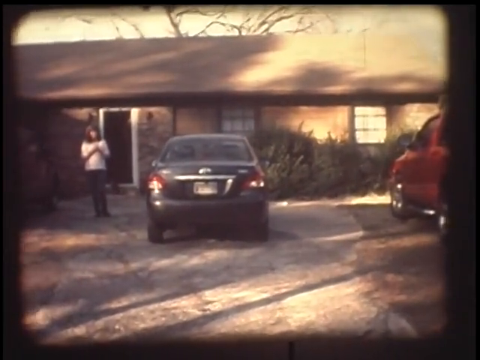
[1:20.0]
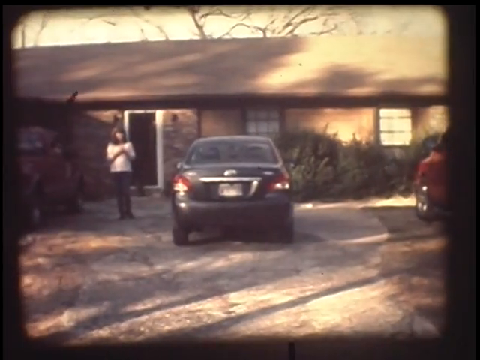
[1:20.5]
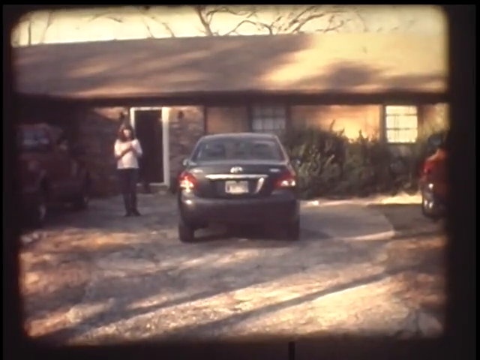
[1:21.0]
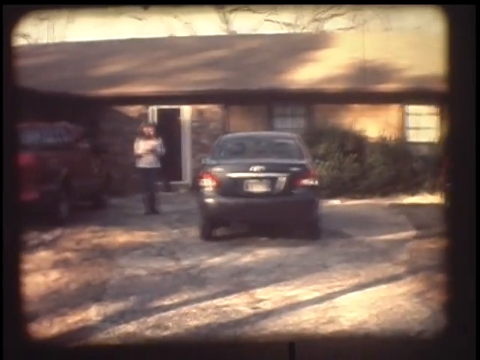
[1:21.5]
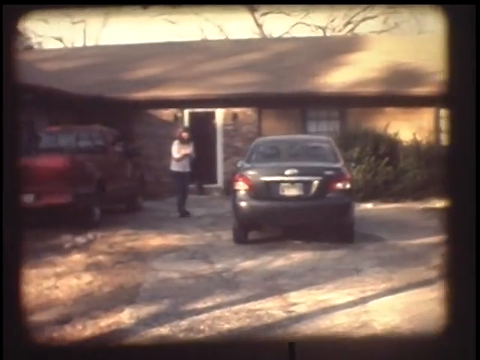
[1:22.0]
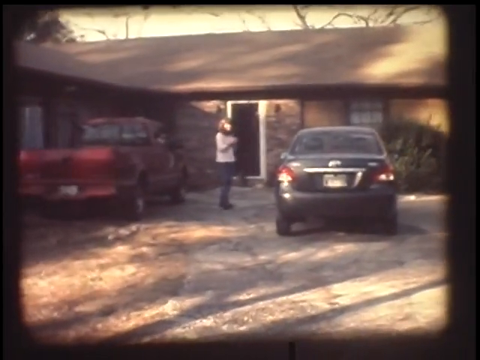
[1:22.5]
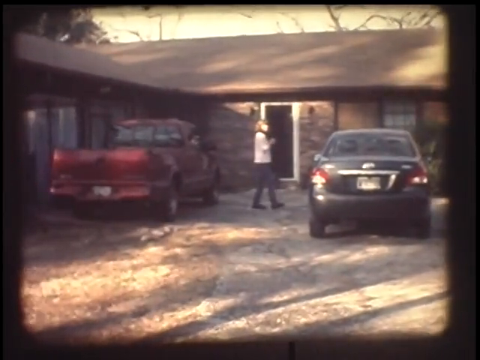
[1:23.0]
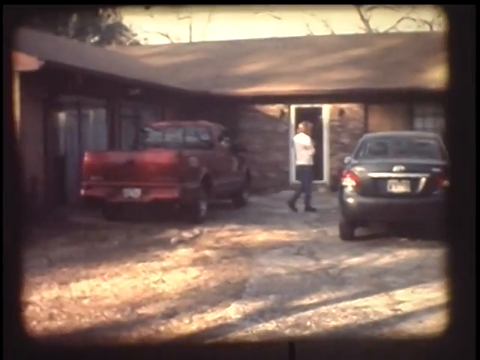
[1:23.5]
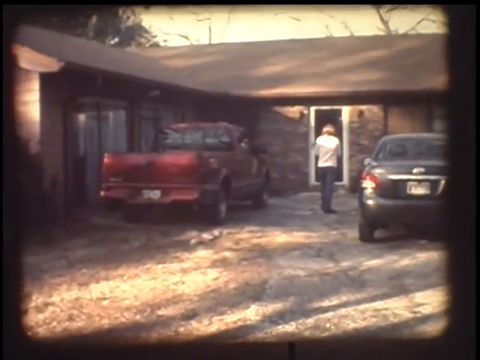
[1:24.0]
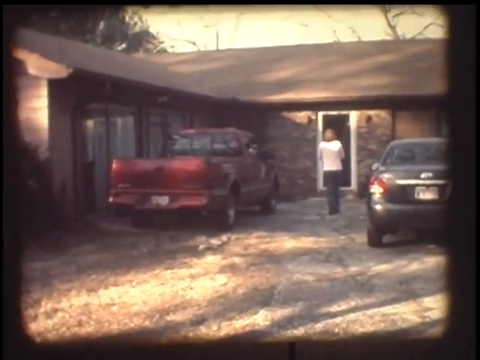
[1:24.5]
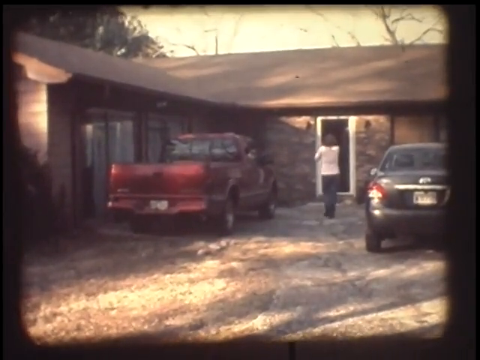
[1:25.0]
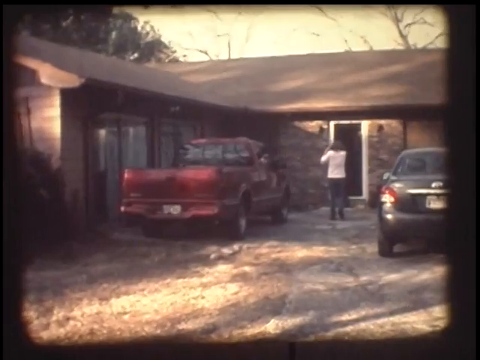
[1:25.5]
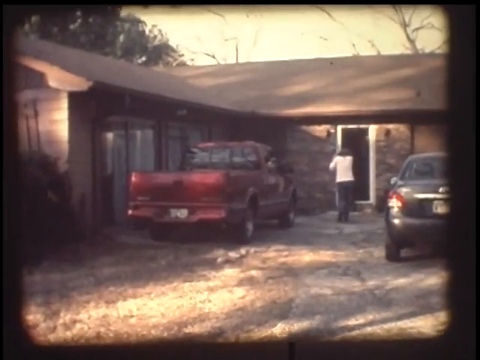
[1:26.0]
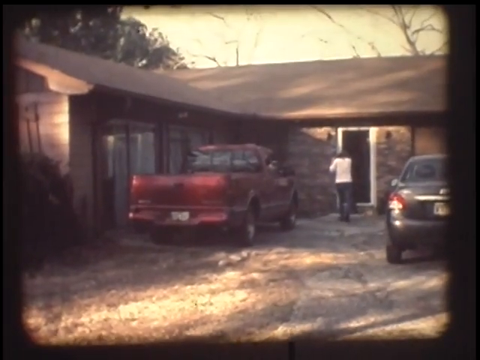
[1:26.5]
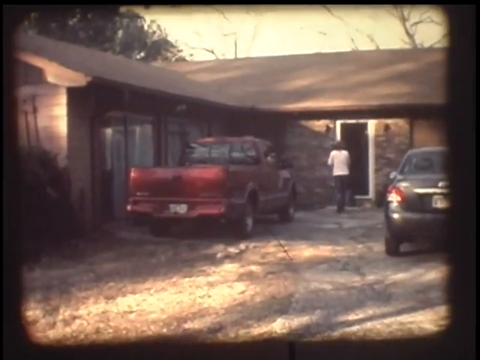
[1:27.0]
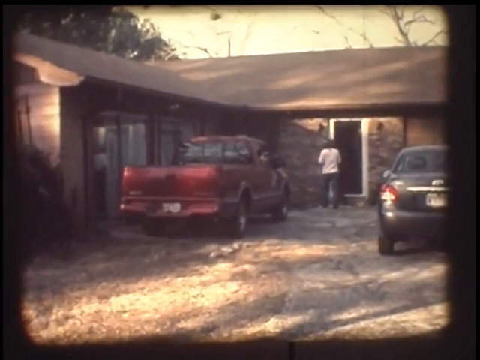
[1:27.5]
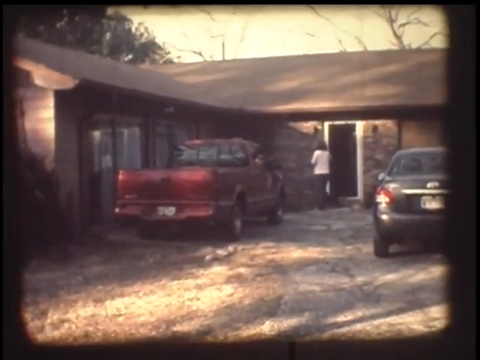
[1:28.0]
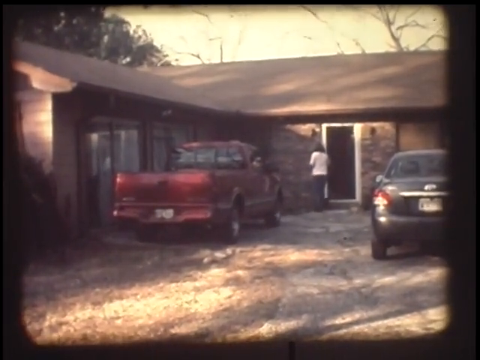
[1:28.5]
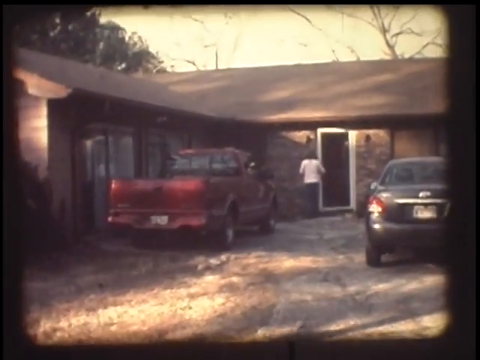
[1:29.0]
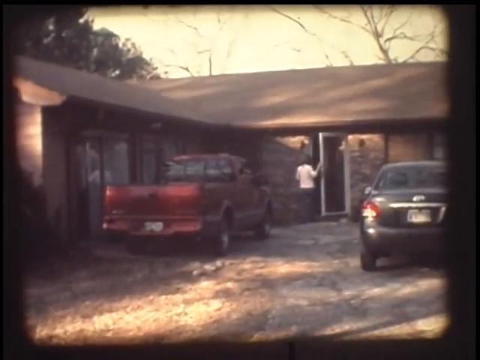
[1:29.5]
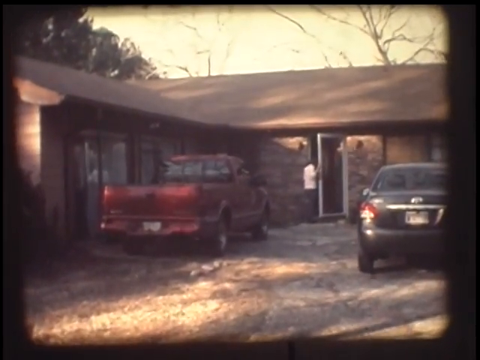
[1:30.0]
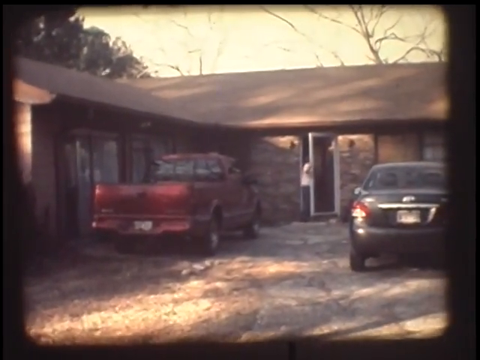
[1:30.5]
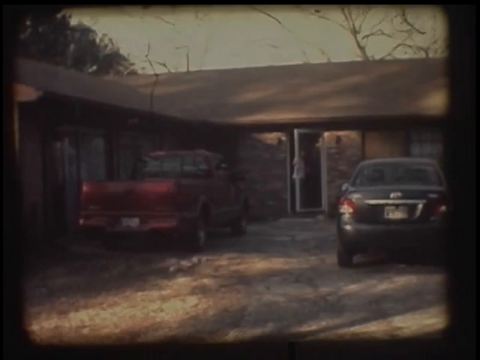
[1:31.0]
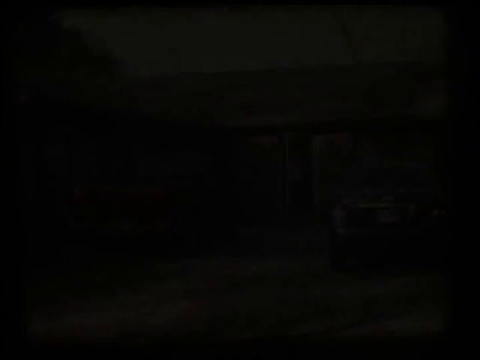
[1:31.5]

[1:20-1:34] The camera pans back to the left, and the truck on the right side goes off the screen. The woman is in the center, straight in front of the door of the house, probably six feet away from it, about halfway deep in the frame. She turns to the right and slowly starts walking back toward the door as the camera shakes a little. She walks up to the door, grabs it, opens it out to the right and walks inside, and the video fades to black. The door is a screen door with white trim, and the house is red brick with a peaked rooftop showing red shingles.